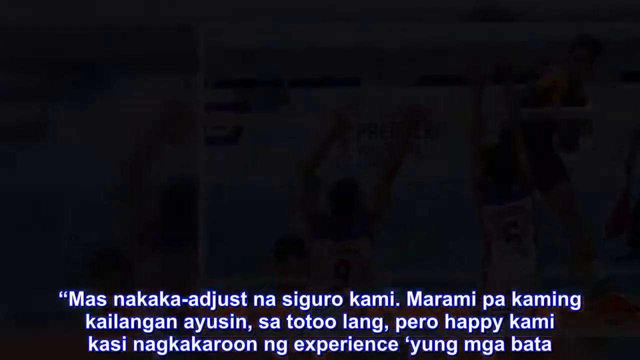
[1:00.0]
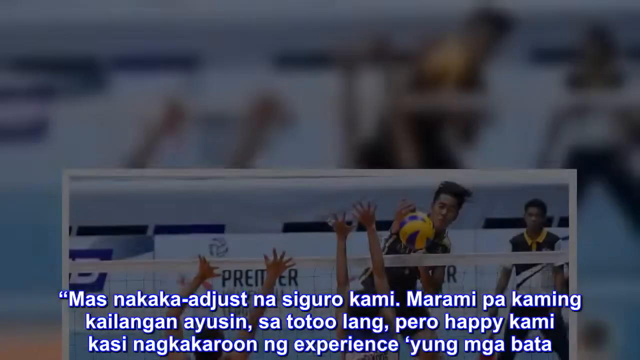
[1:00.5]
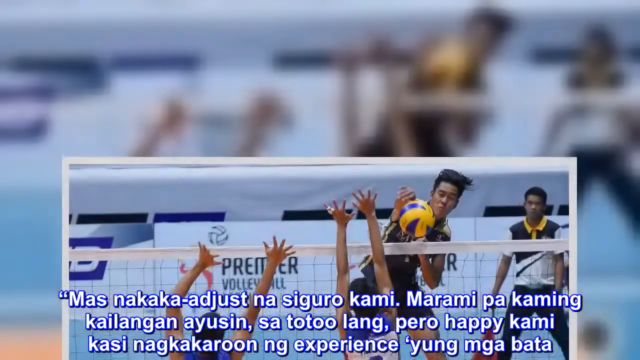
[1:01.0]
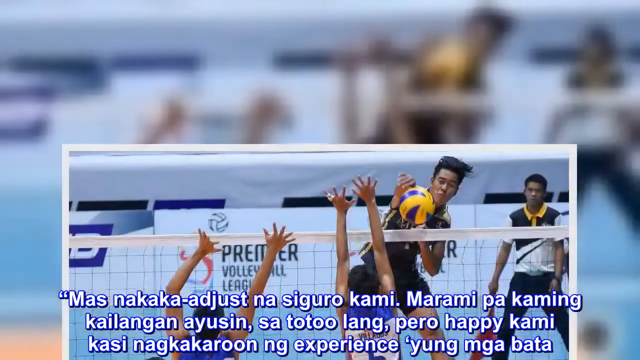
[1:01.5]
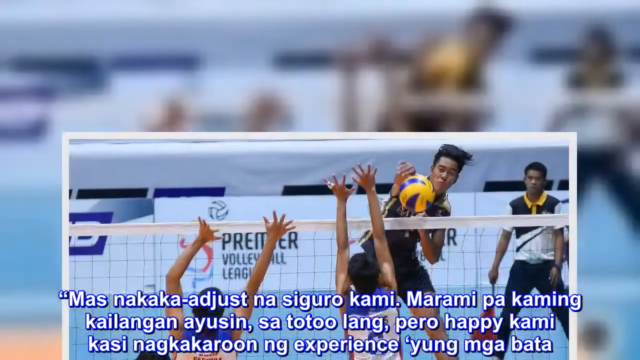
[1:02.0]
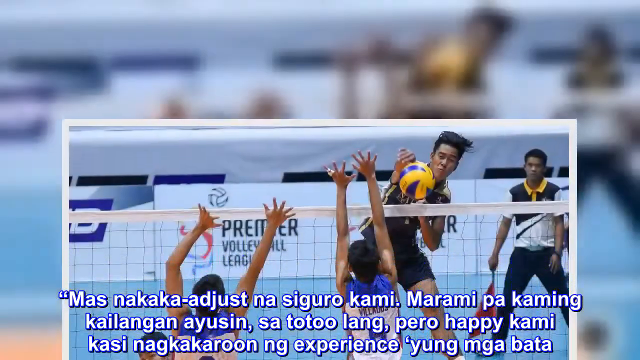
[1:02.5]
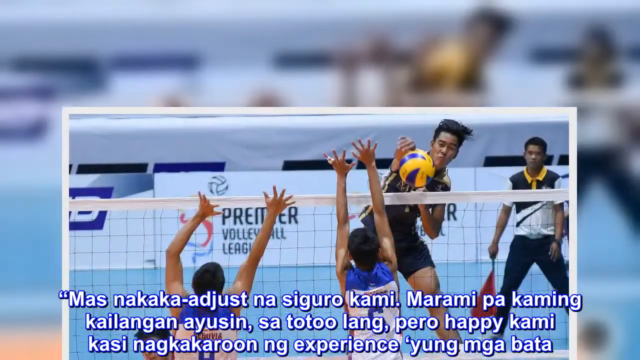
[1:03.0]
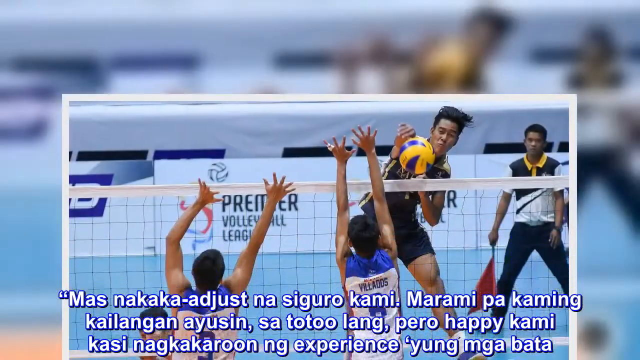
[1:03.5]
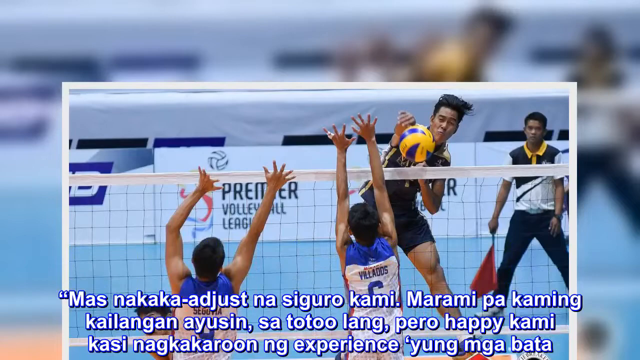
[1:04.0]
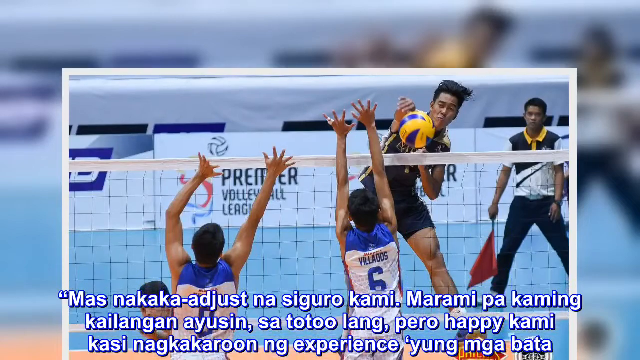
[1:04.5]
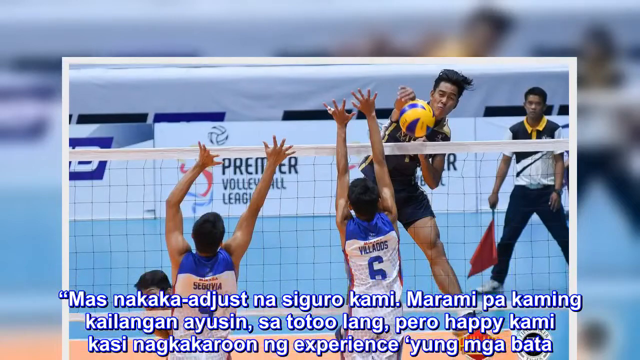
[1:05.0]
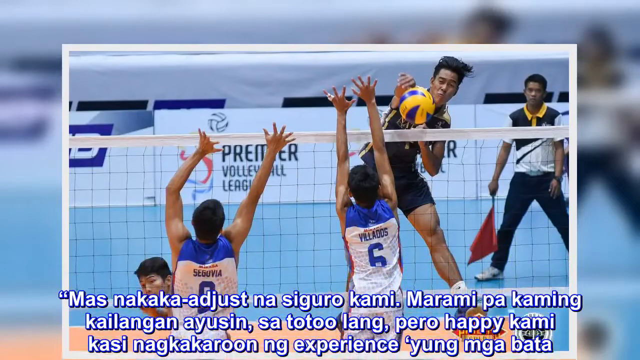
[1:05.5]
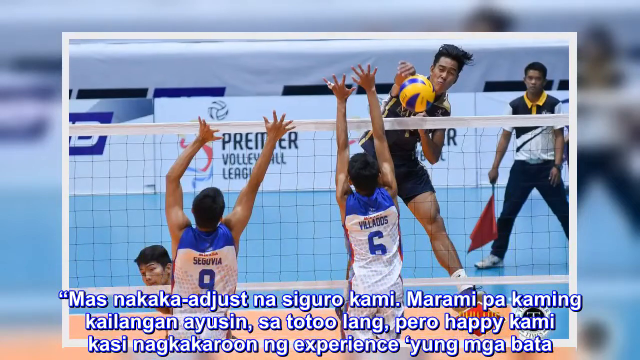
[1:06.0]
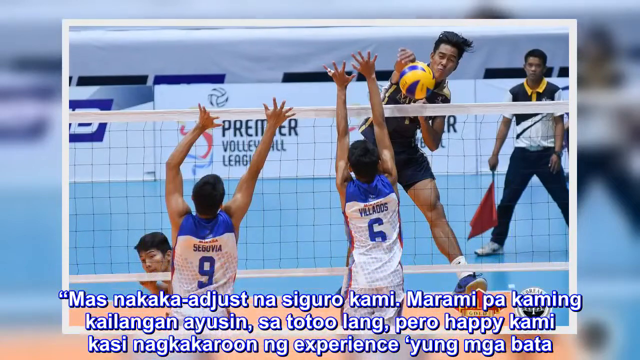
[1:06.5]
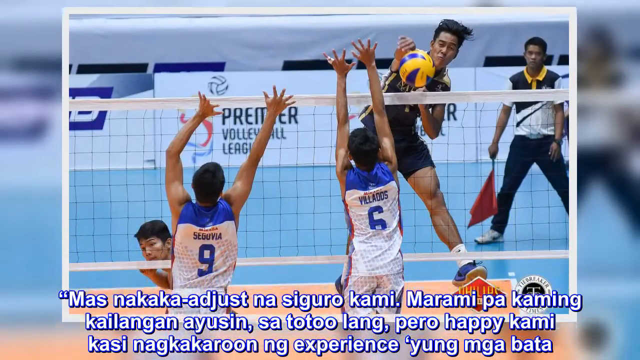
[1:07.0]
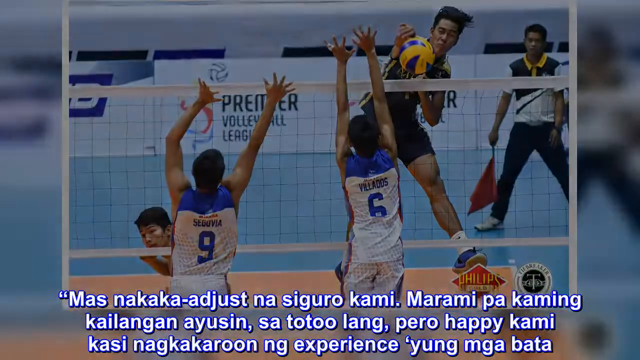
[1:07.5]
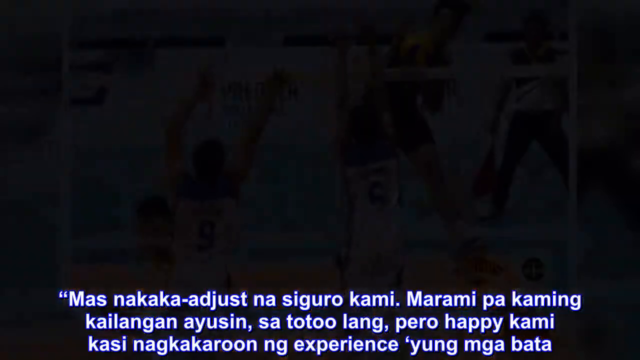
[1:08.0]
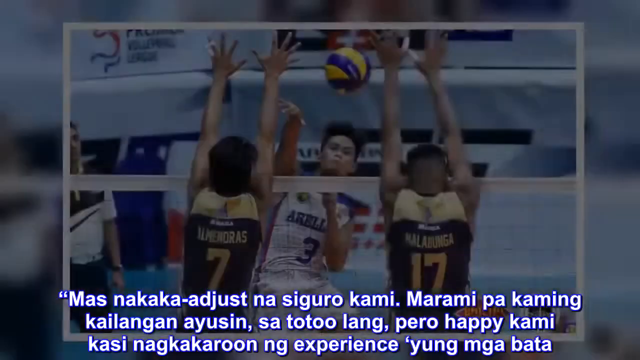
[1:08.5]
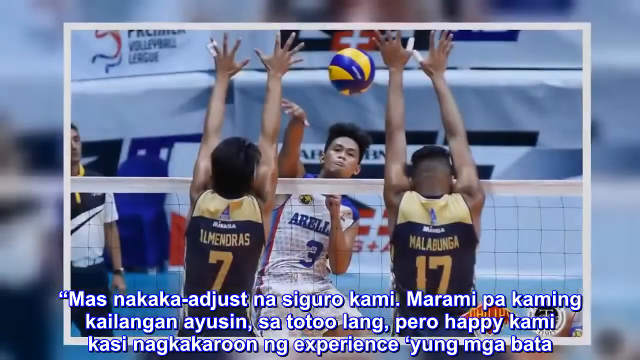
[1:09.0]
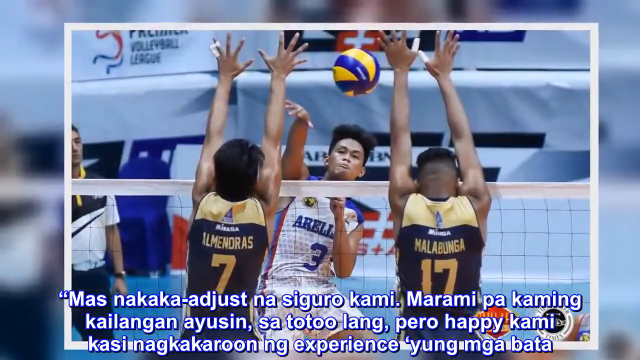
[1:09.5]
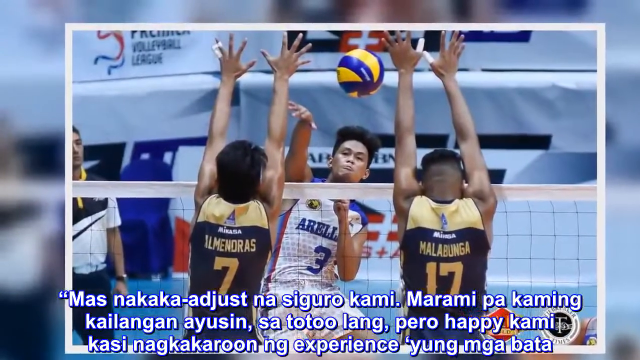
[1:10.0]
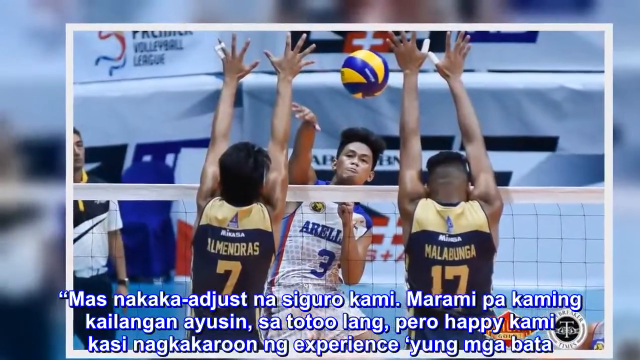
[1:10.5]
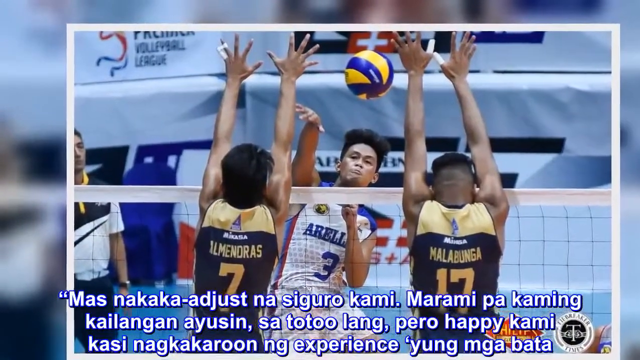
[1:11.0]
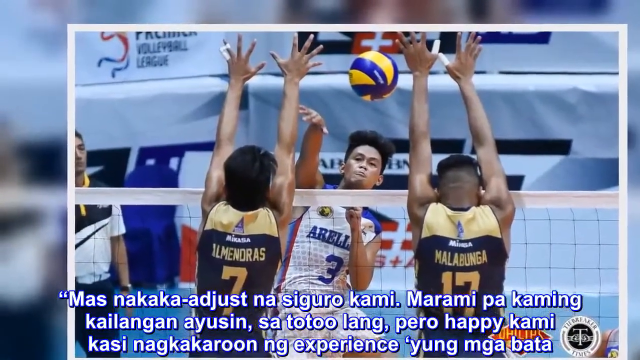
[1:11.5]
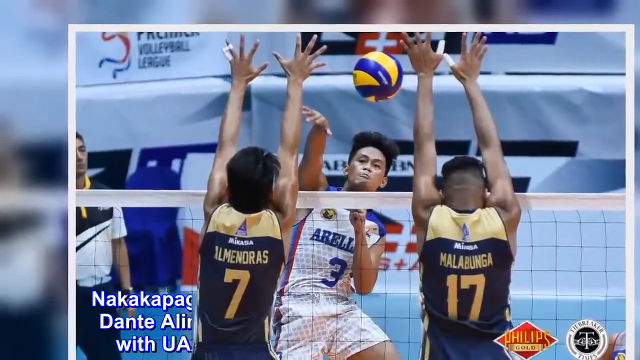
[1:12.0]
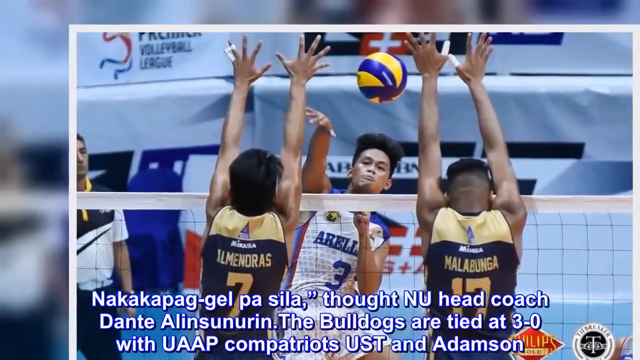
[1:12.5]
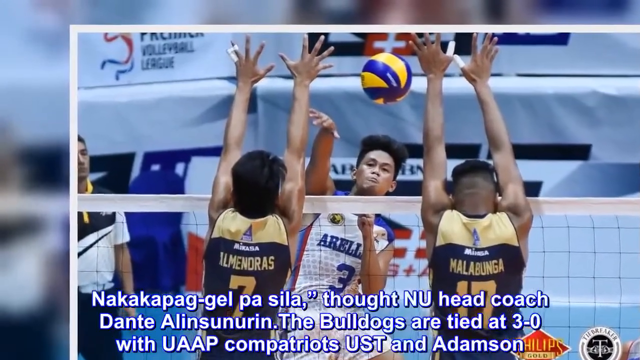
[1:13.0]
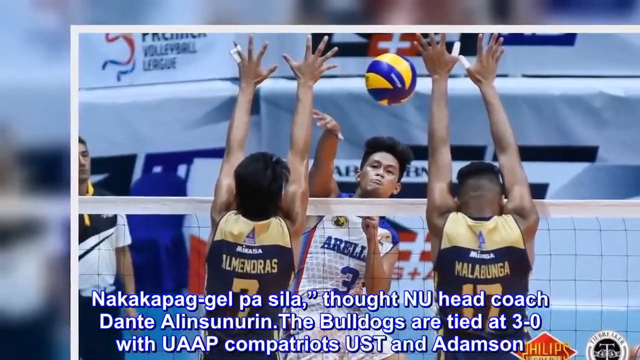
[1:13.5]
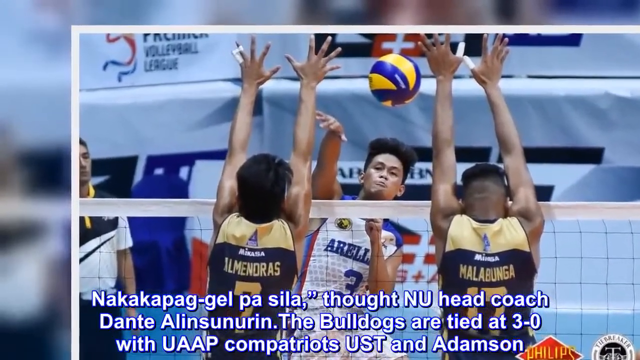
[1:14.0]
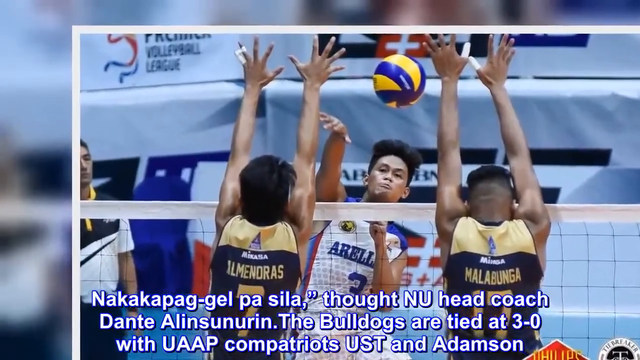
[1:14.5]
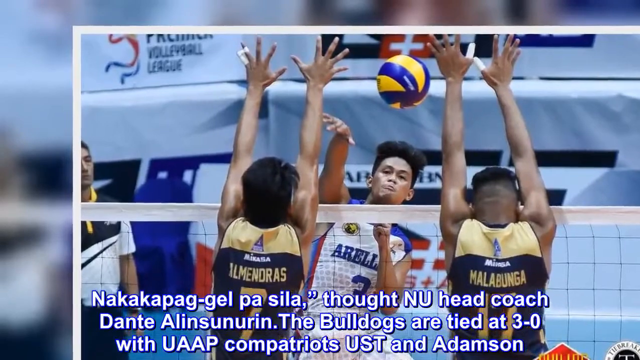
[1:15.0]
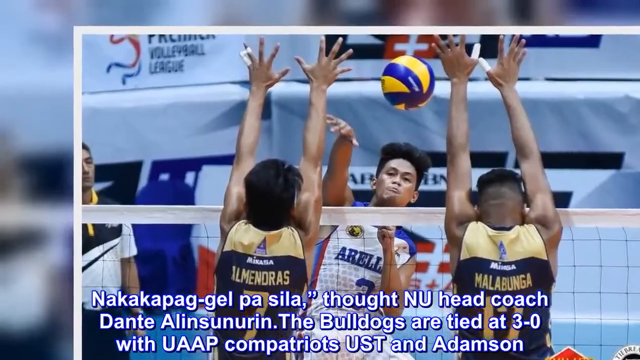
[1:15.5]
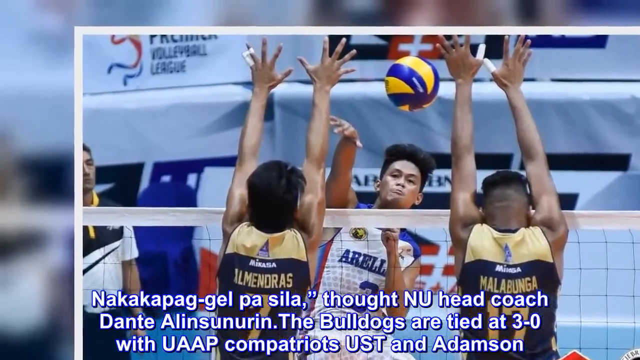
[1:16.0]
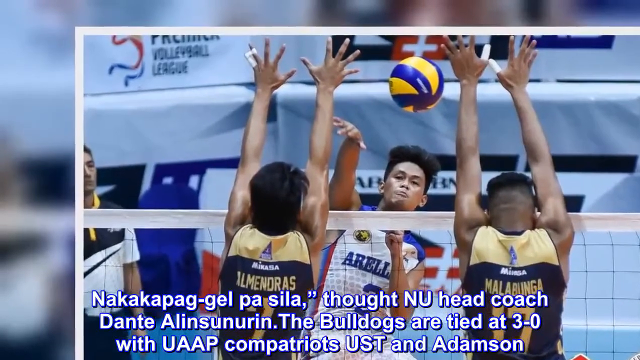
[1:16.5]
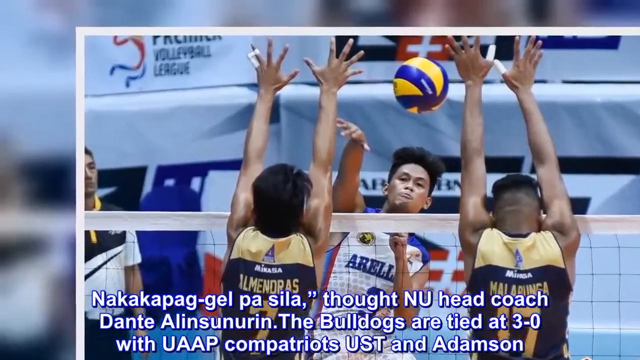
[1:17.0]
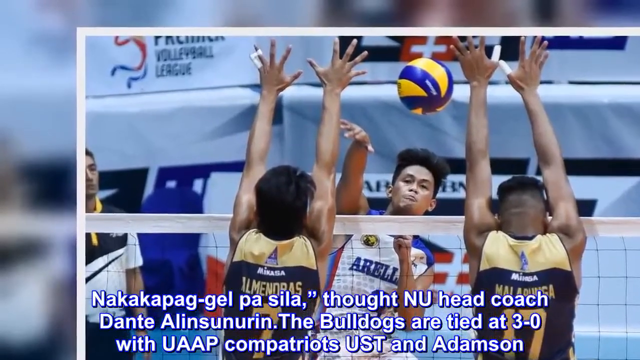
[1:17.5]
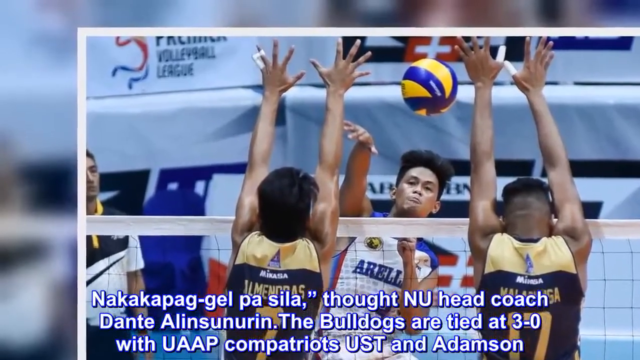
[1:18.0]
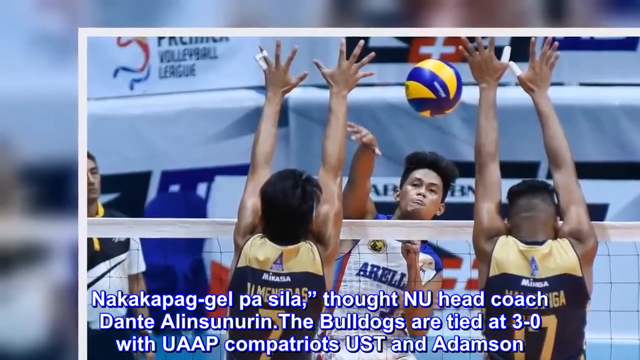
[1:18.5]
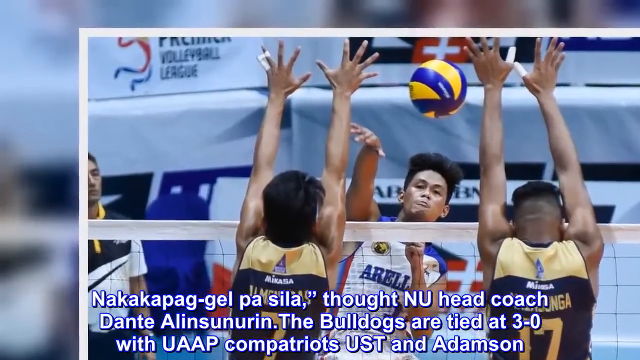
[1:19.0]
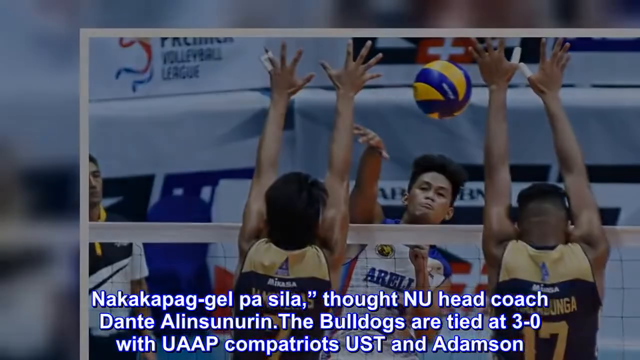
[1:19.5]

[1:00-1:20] Still shots of the men's volleyball championship game between the defending National University Bulldogs and the Arellano University Chiefs are shown. The text at the bottom is now apparently in Filipino, seemingly repeating what was earlier shown in English. A highlight shows the number 17 player of the National University Bulldogs slamming the ball past the number 6 player of the blue and white Arellano team.